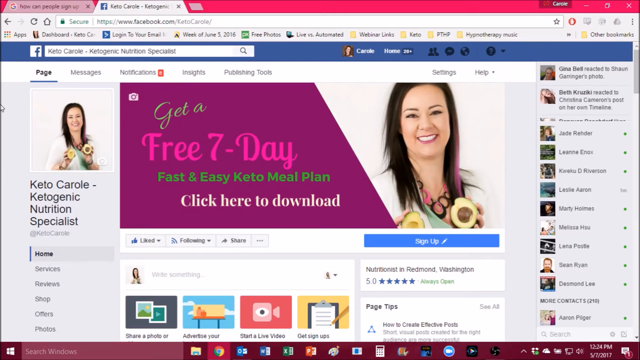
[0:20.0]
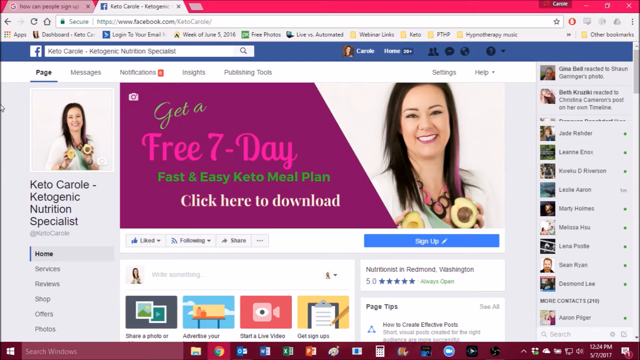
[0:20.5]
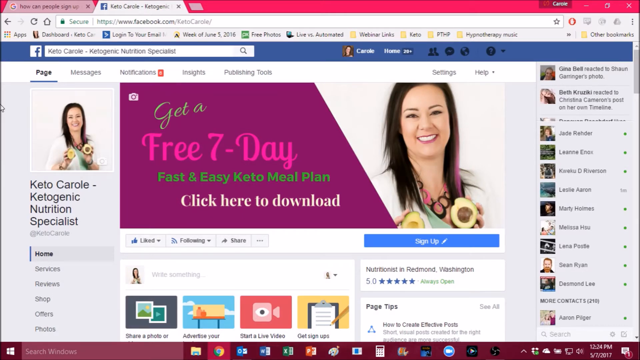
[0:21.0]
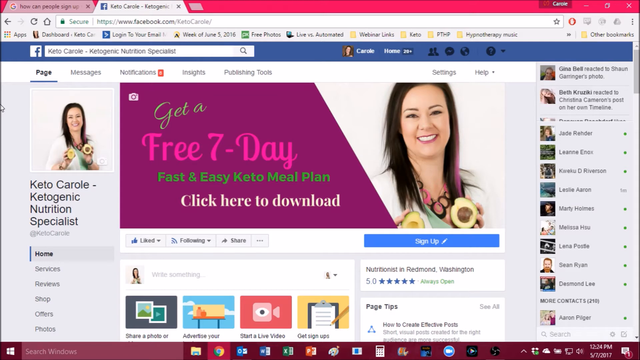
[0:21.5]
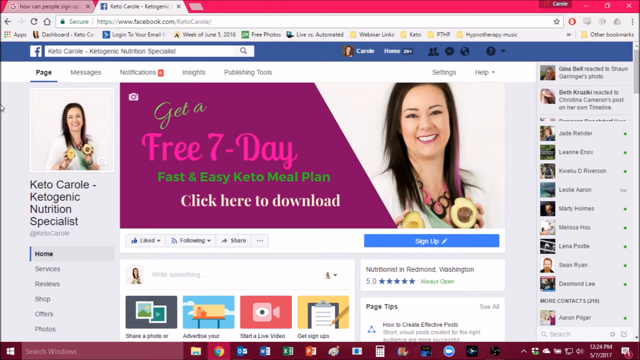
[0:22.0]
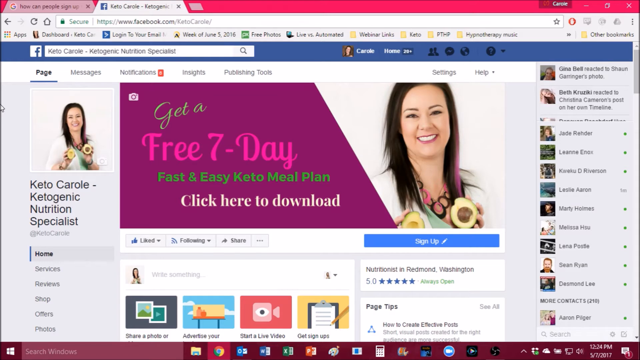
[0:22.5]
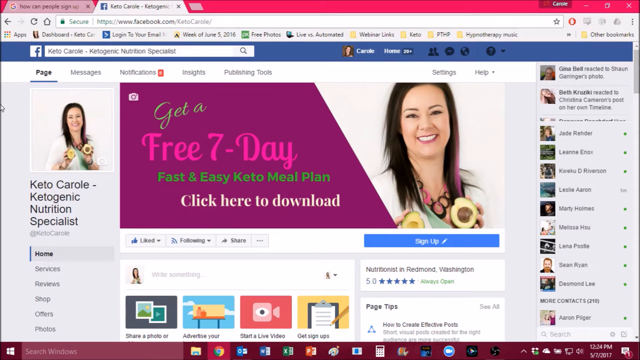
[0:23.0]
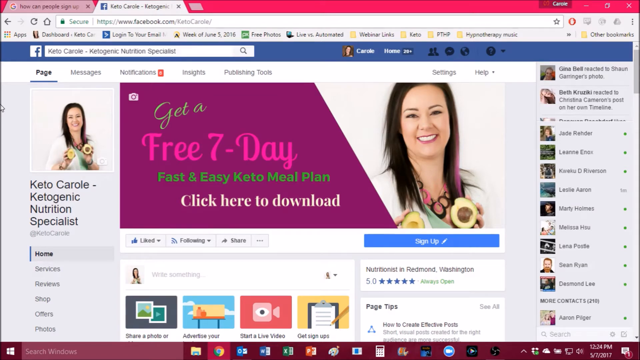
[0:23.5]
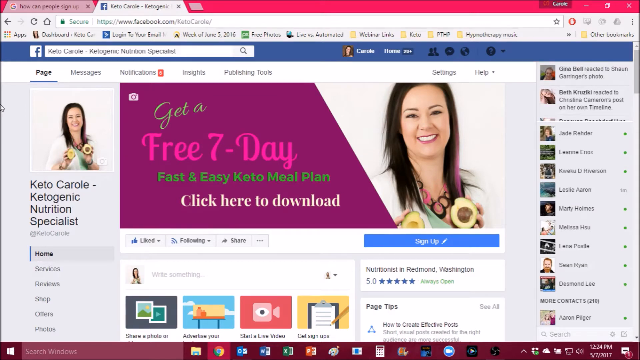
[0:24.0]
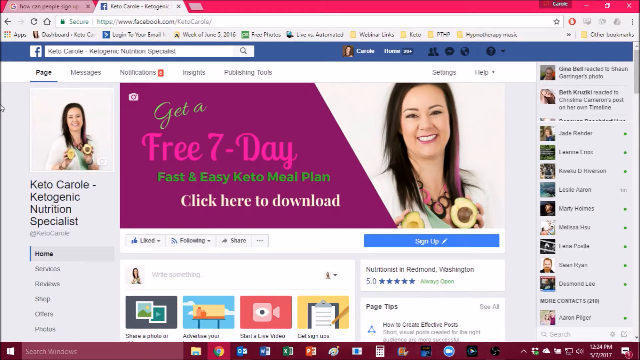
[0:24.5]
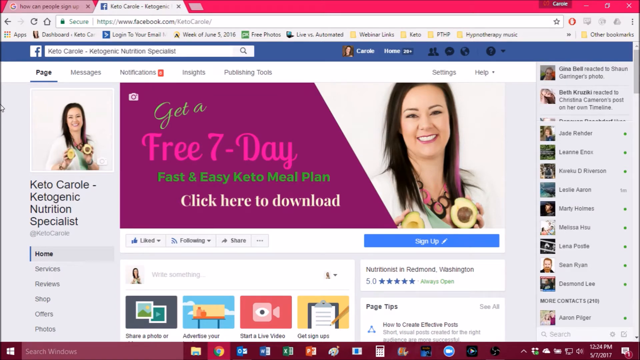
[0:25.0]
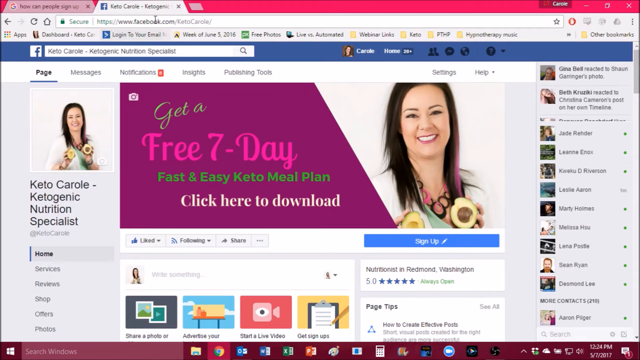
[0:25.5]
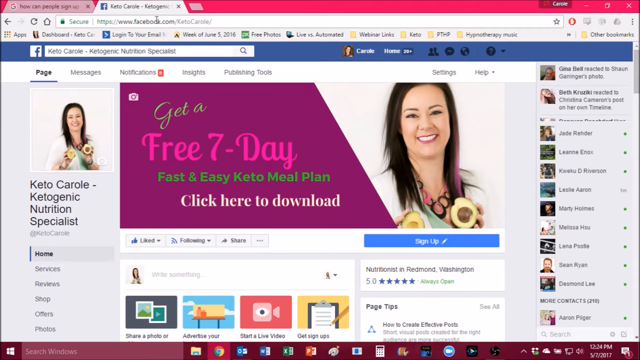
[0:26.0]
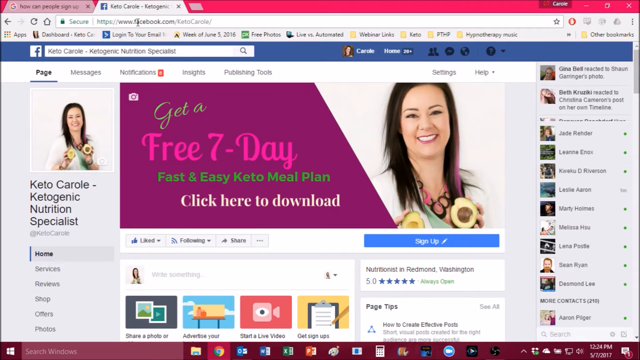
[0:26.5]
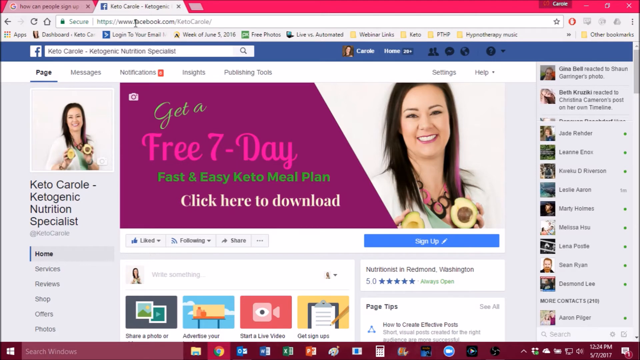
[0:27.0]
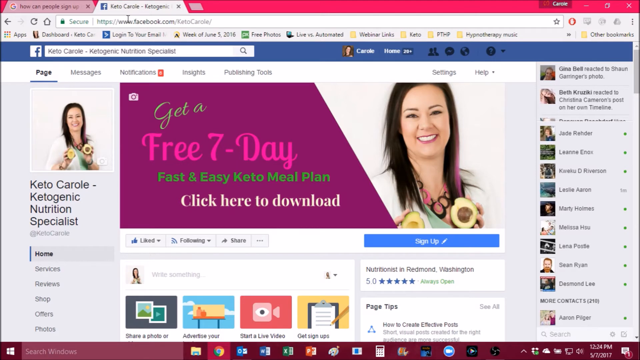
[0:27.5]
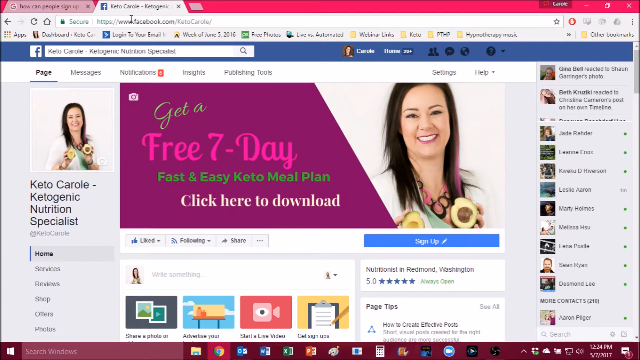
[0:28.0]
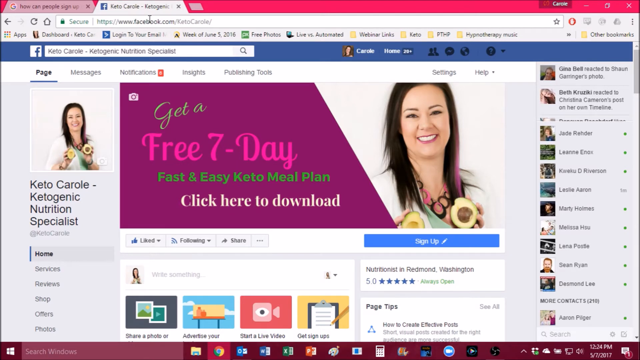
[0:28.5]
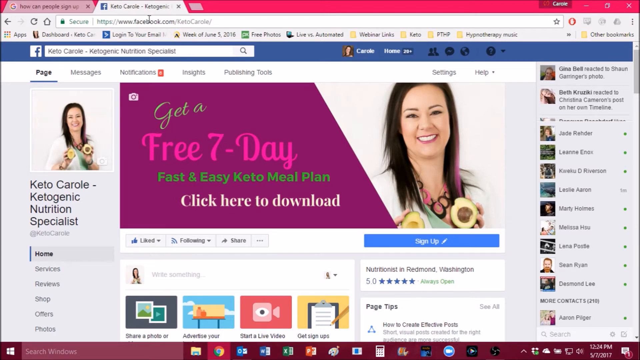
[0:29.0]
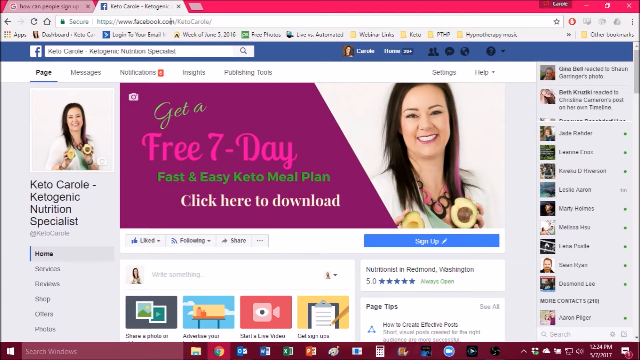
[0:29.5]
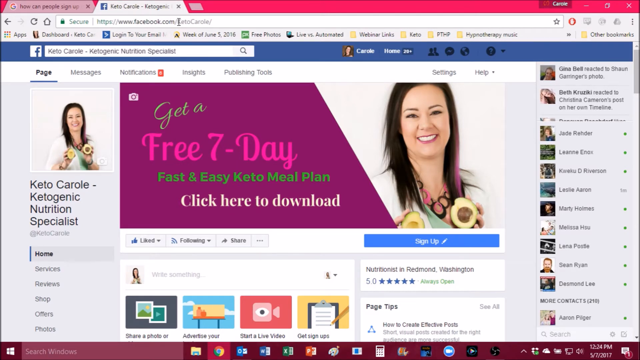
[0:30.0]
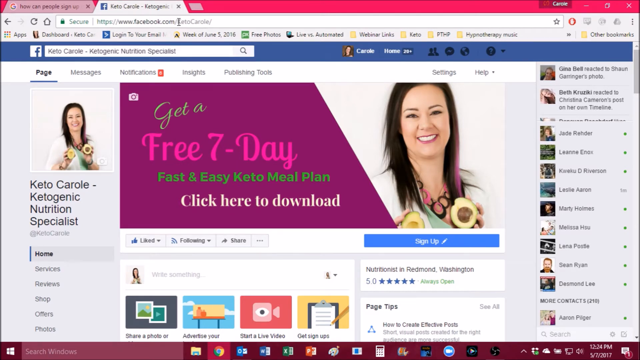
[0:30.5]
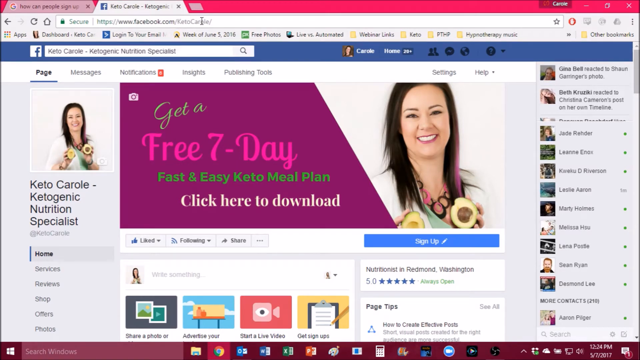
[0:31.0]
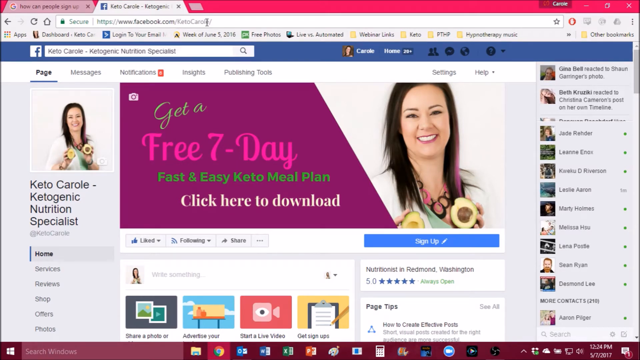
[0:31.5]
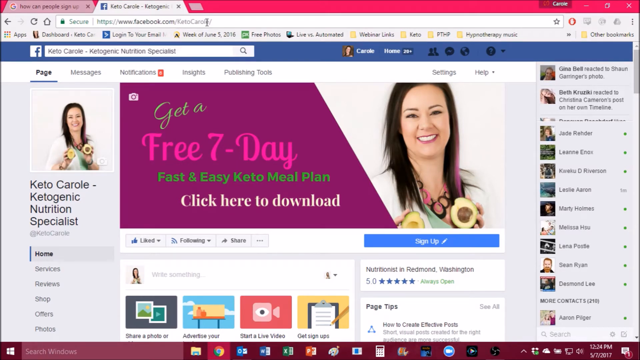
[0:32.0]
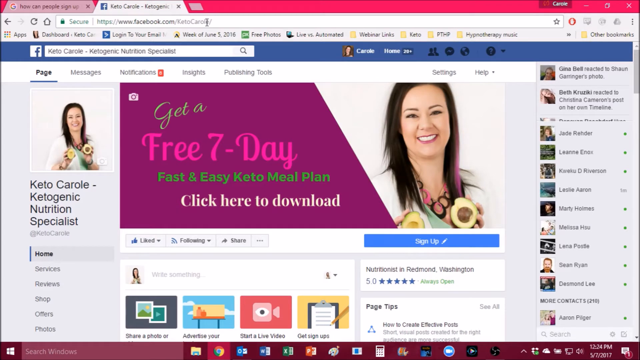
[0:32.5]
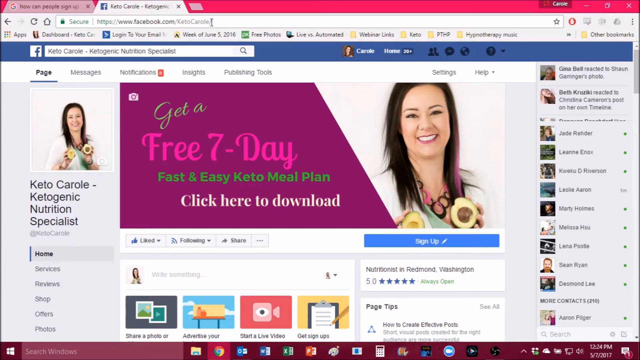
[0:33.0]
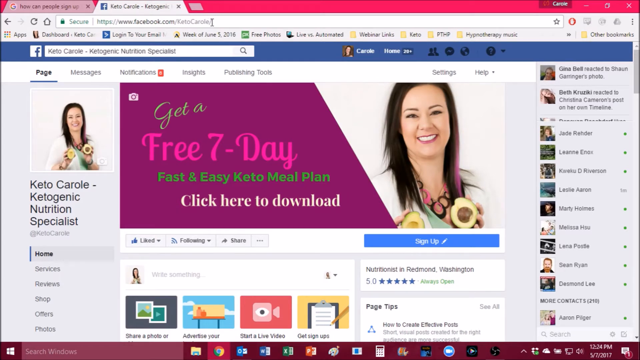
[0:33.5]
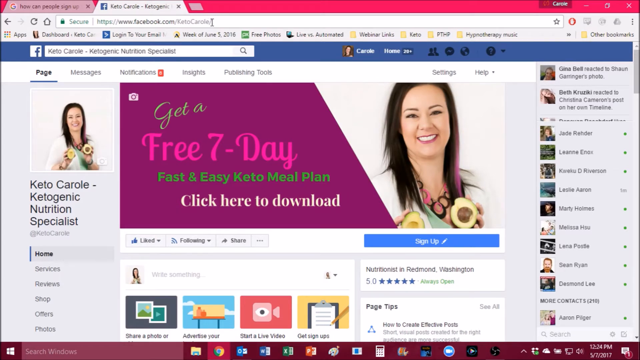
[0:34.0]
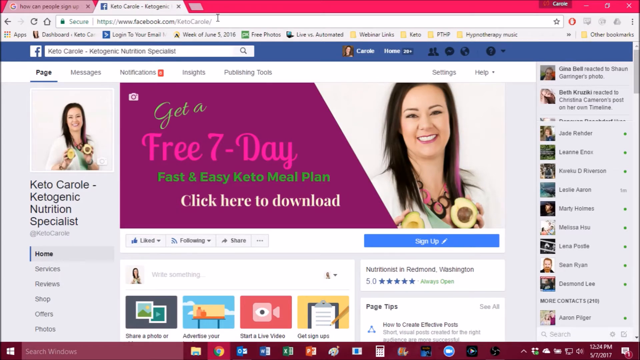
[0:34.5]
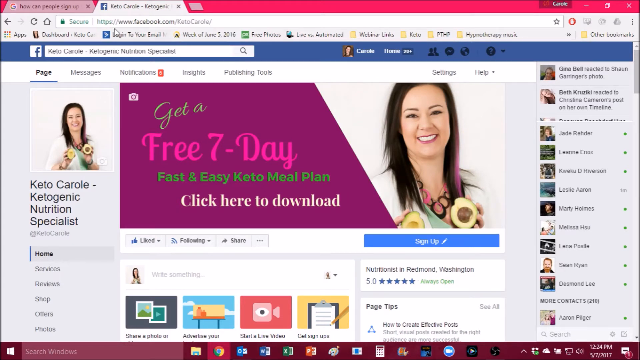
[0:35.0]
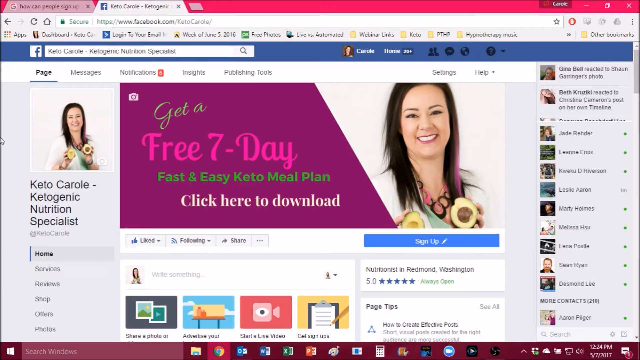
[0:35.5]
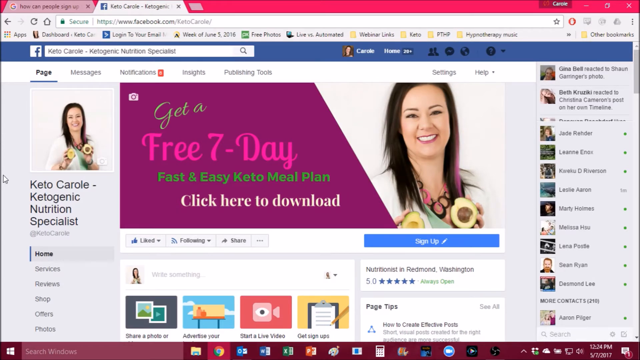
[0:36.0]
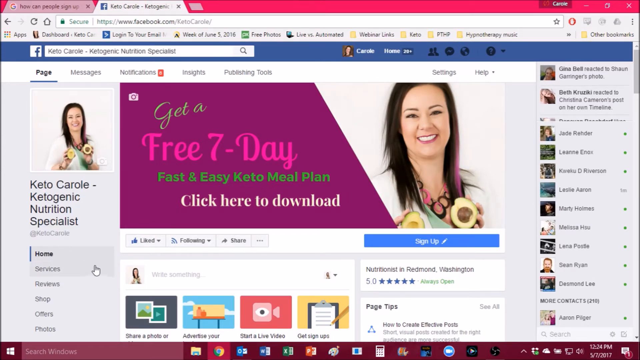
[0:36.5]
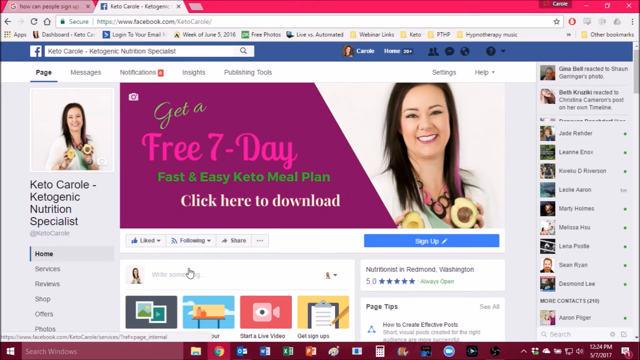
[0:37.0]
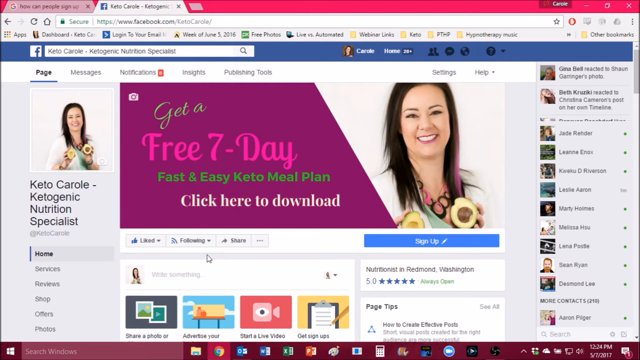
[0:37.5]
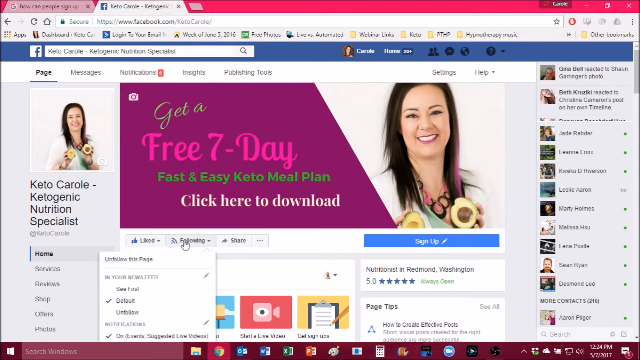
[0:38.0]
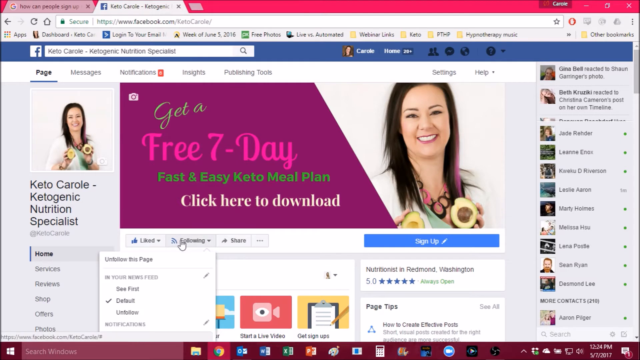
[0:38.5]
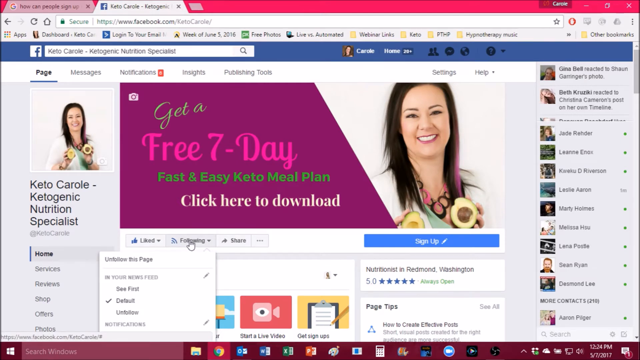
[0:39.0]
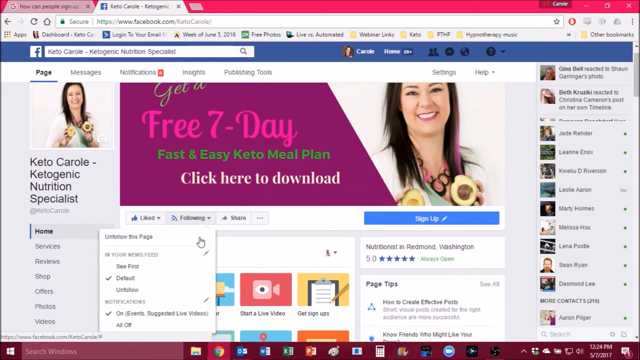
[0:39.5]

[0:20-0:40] The same Facebook page, the KetoCarol Ketogenic Nutrition Specialist page, remains on screen. The cursor stays in the same spot in the upper left area until, a few seconds in, it abruptly moves diagonally from the left side to the top left and hovers over the URL box. It moves right and left over the URL several times, then slowly from the left side of the URL to the right, almost as if someone is narrating the URL information. The mouse then makes several quick clockwise circular motions, moves all the way to the far left of the screen capture, and then moves down quickly and a bit to the right to highlight the home area of the Facebook page.